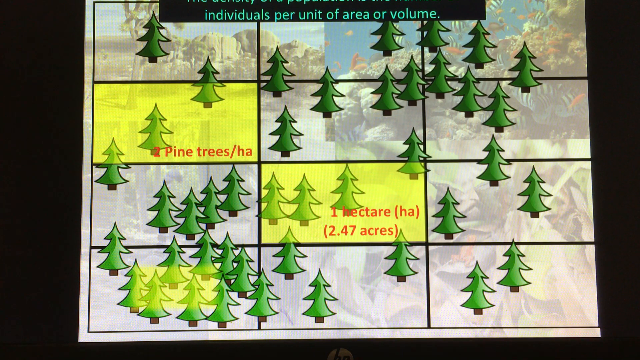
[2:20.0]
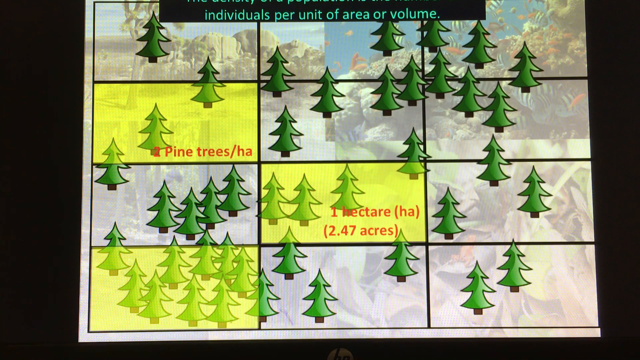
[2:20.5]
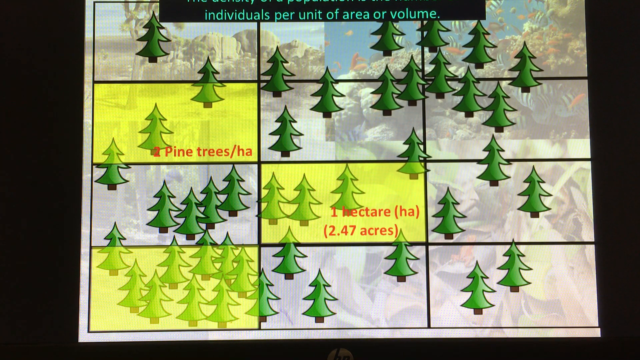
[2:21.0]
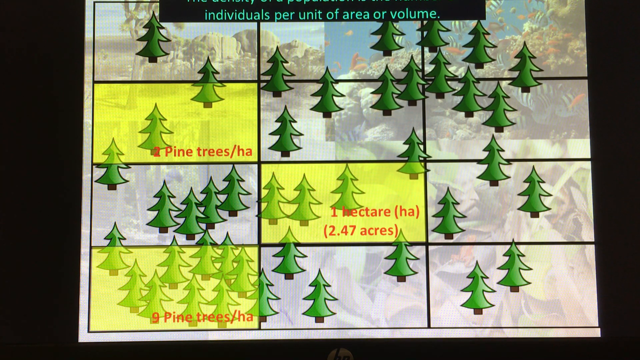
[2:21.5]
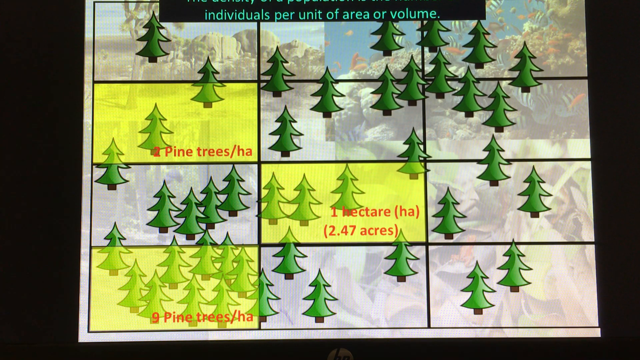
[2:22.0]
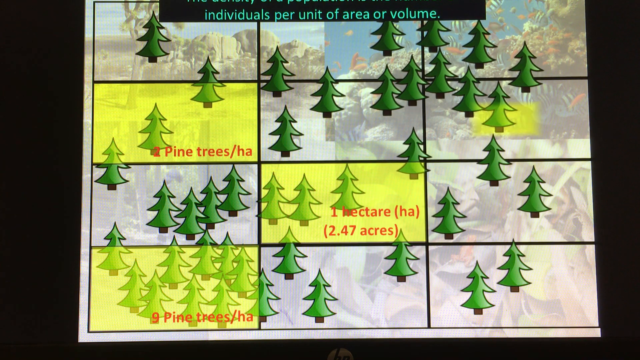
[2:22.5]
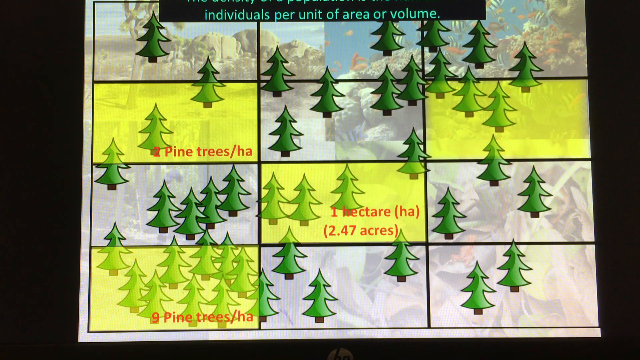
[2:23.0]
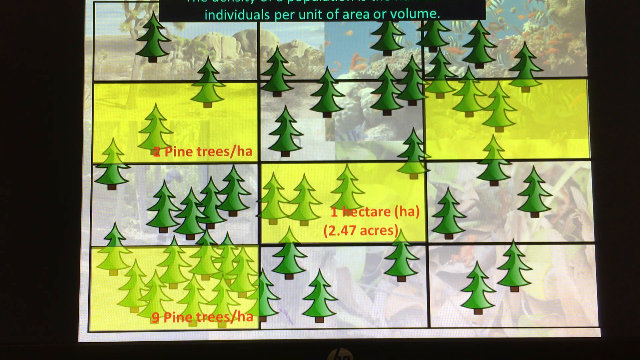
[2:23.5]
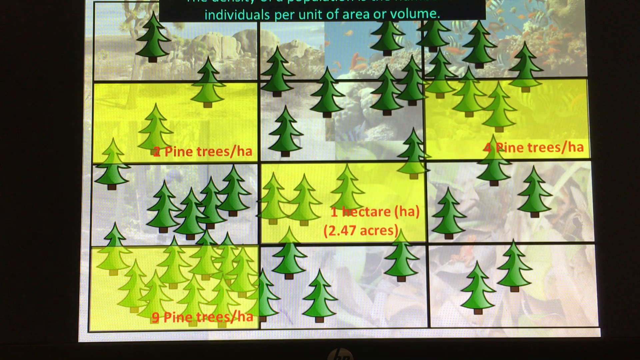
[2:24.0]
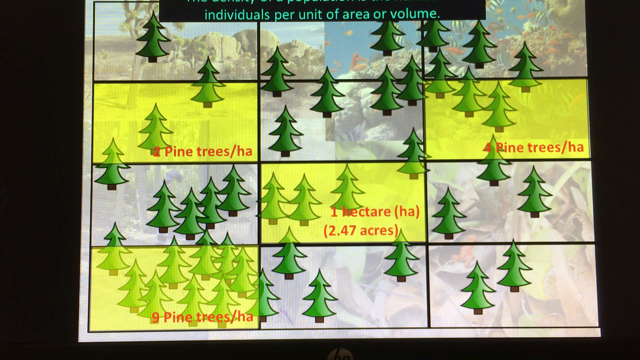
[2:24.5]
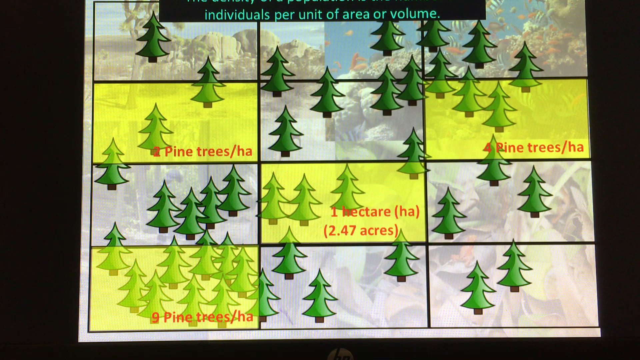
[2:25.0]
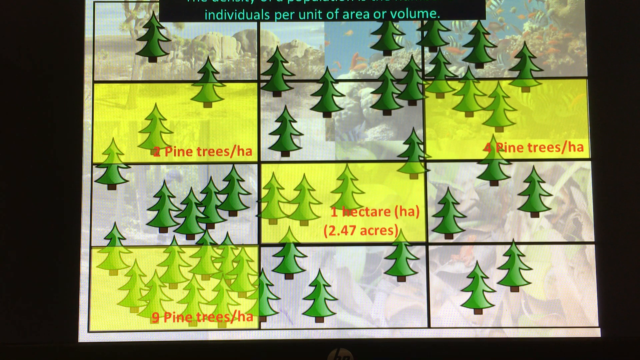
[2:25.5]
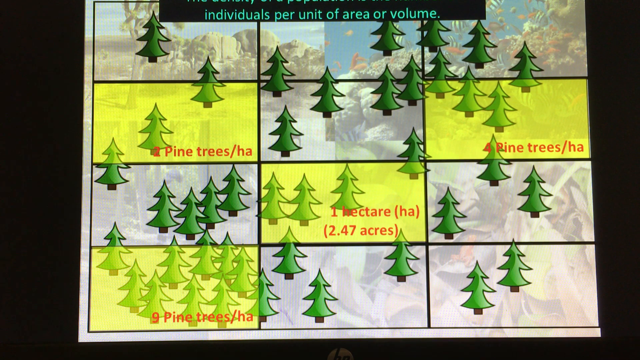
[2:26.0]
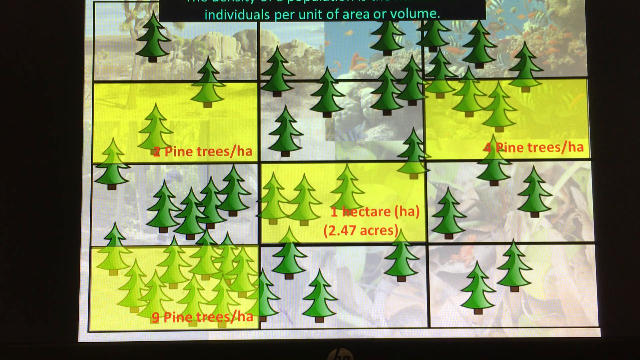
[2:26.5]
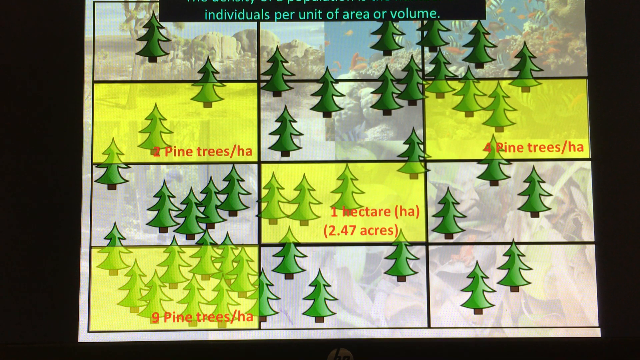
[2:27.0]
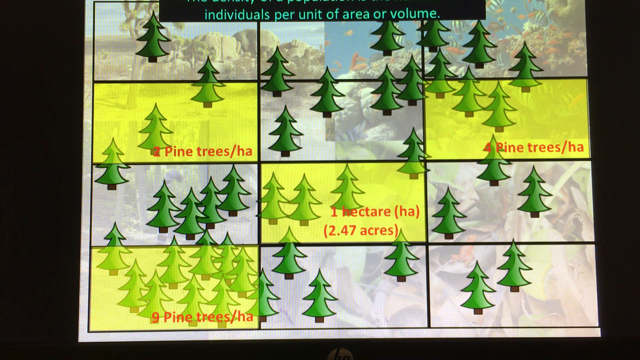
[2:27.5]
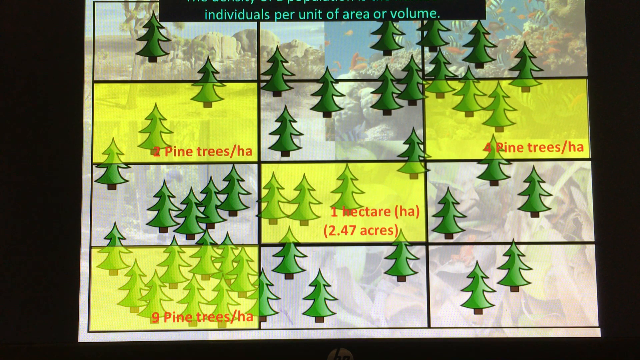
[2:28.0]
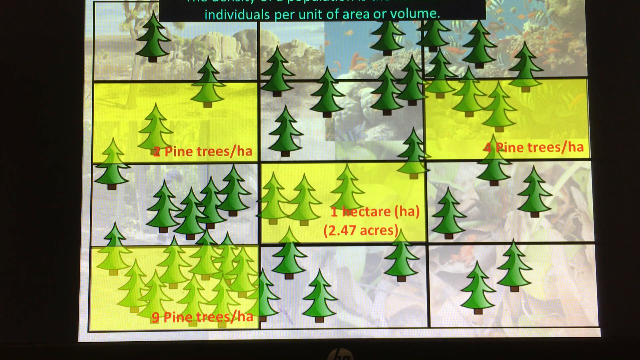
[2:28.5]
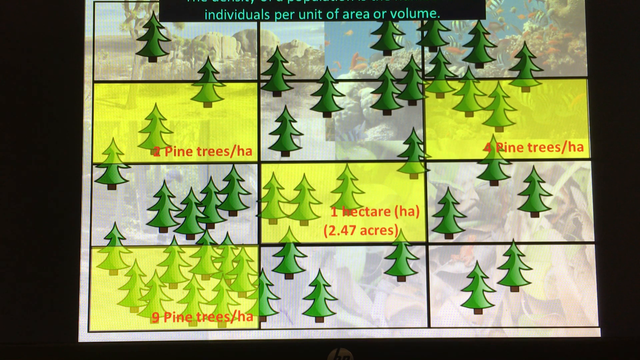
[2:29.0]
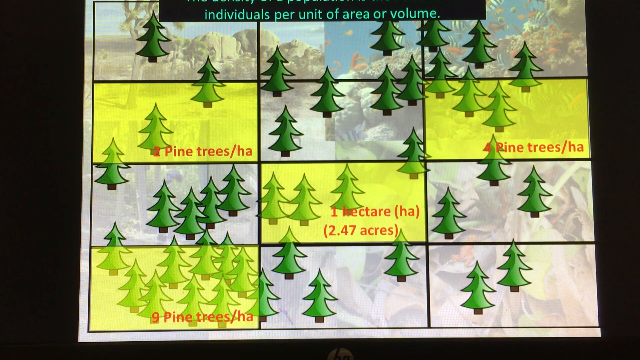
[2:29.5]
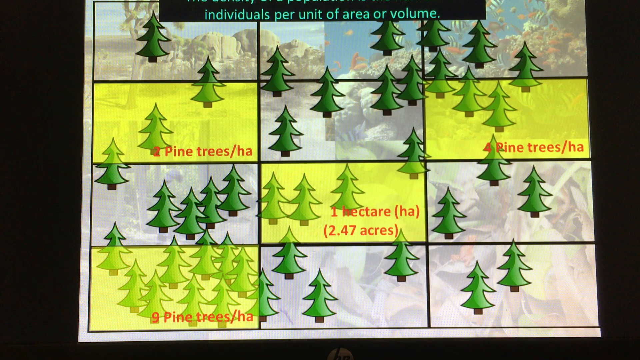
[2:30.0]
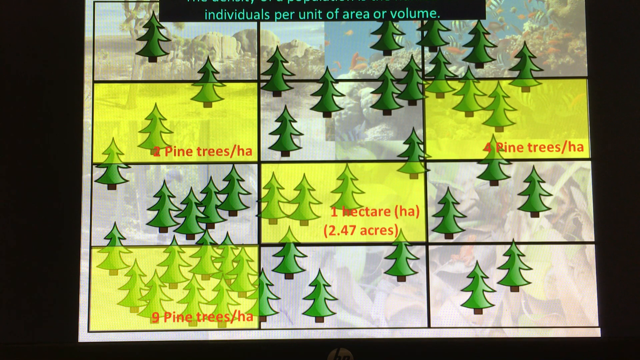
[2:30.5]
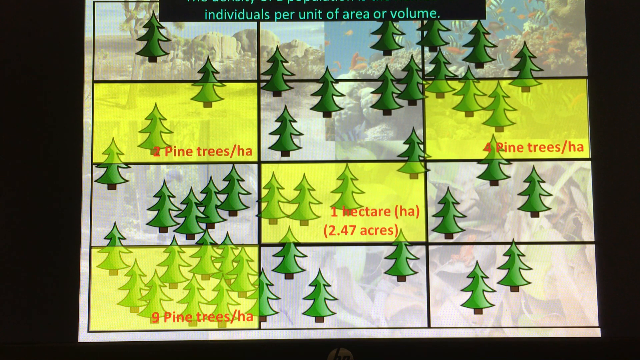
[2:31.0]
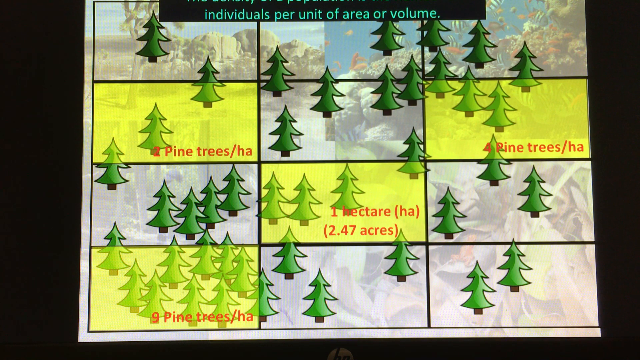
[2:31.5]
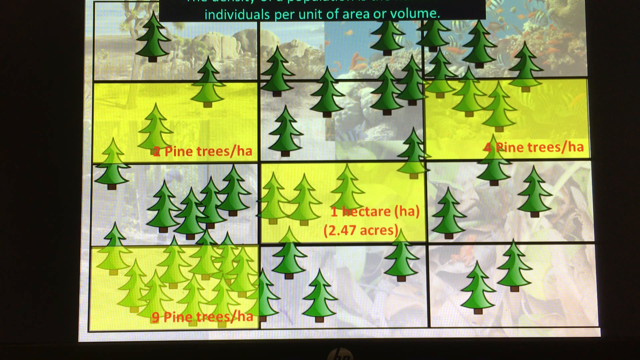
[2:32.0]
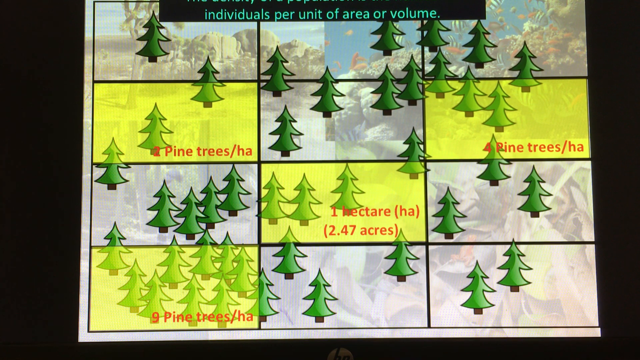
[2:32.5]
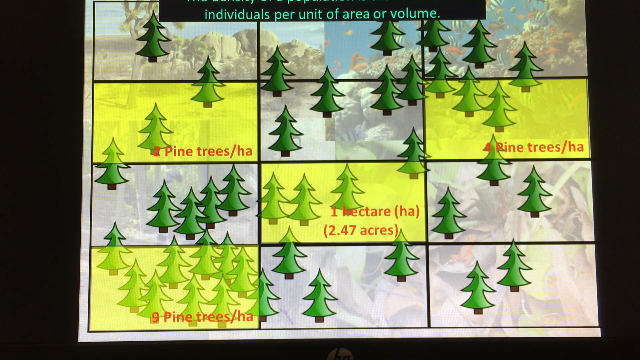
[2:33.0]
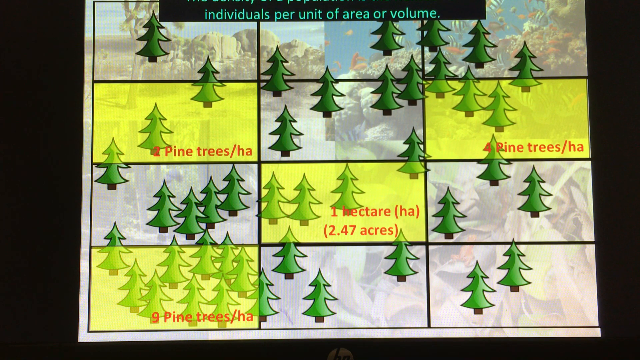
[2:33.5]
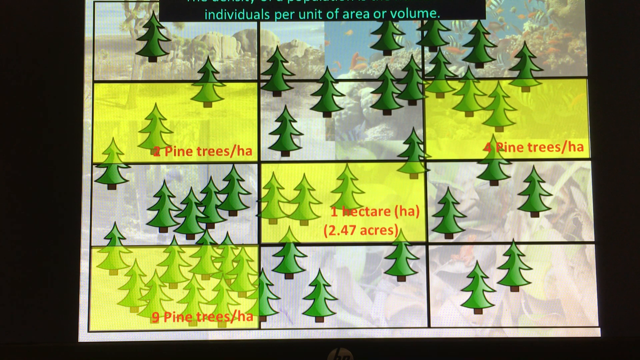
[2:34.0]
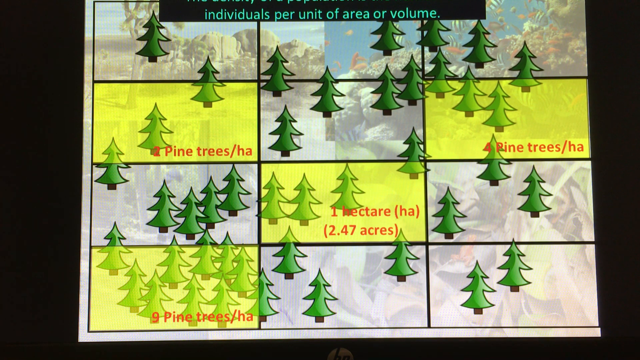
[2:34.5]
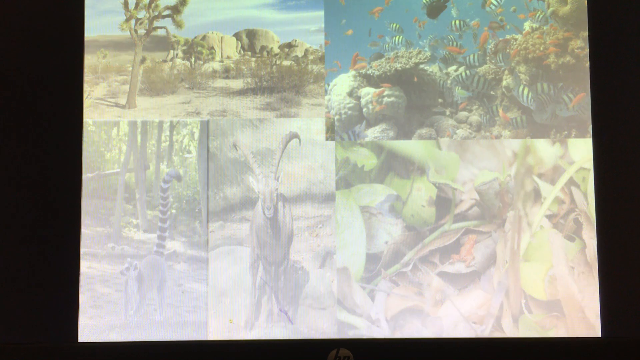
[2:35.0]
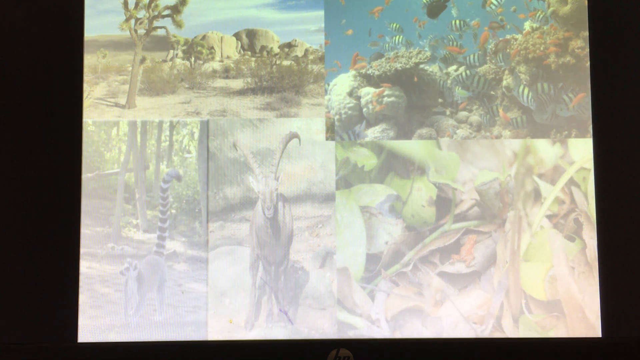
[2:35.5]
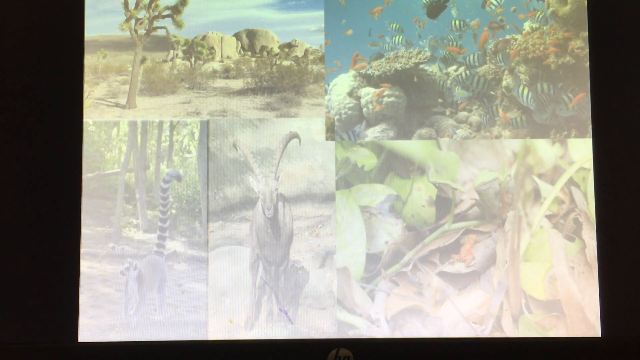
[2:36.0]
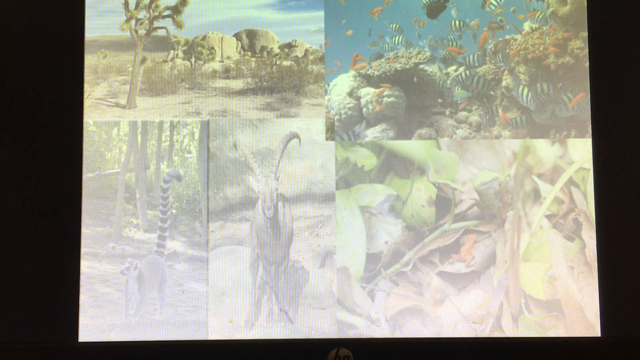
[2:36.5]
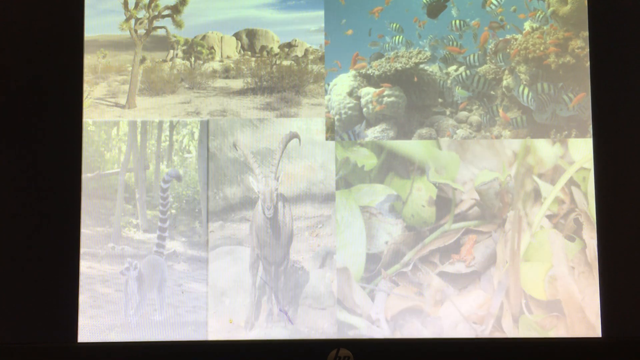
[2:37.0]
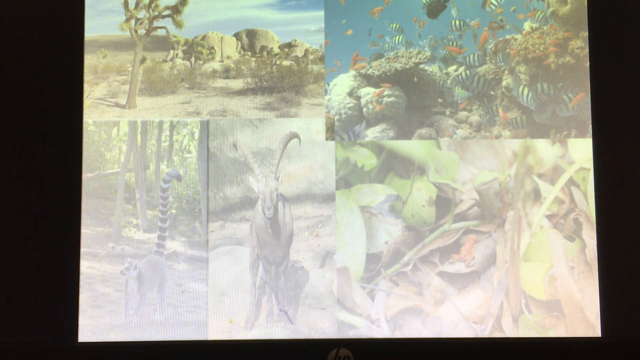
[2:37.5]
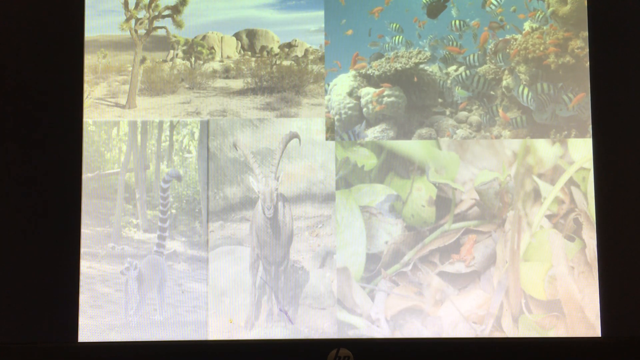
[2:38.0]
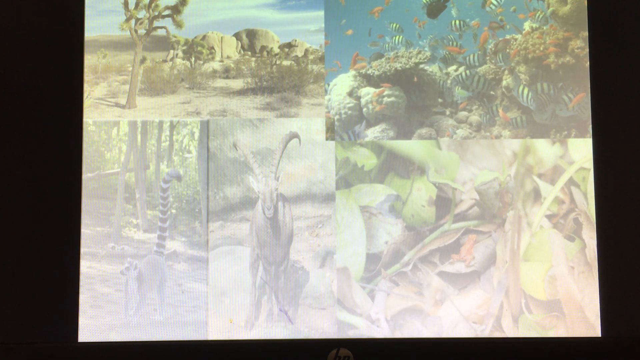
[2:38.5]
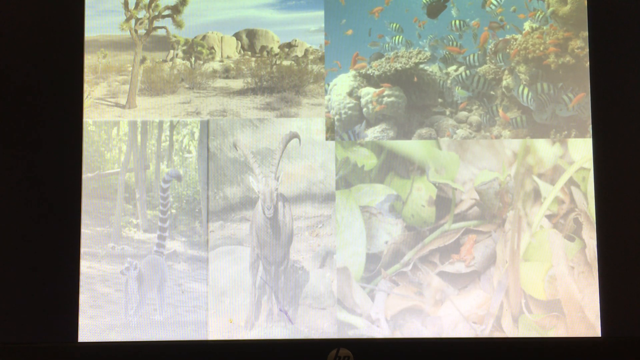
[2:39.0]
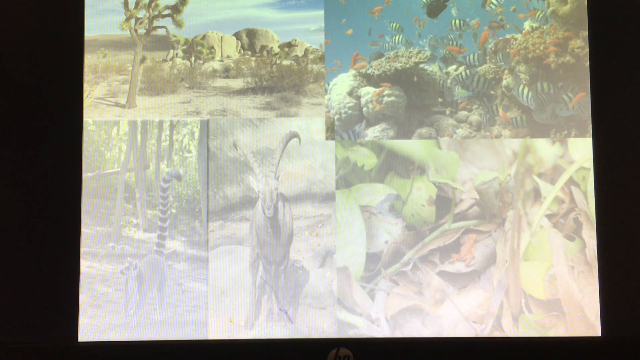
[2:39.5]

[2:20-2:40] Squares in the 3 by 4 grid are filled in with yellow, with pine trees all over the grid. One square says "1 hectare," another says "2 pine trees per hectare," another says "9 trees per hectare," and another says "four pine trees per hectare." The screen then removes the grid and the trees, leaving only the background images: what looks to be a desert in the upper left, an aquarium or undersea photo in the upper right, some sort of monkey in the lower left, what looks like a goat or ram in the middle, and apparently some form of lizard in the lower right. The screen stays like this to the end.